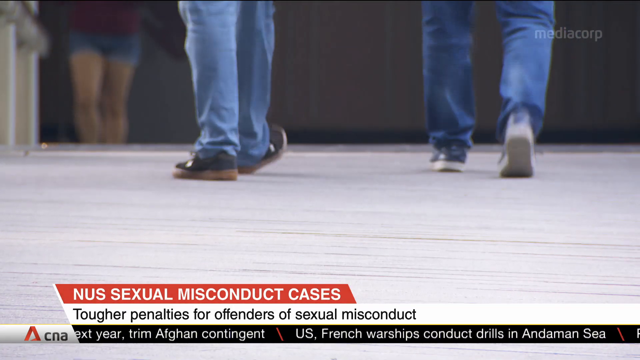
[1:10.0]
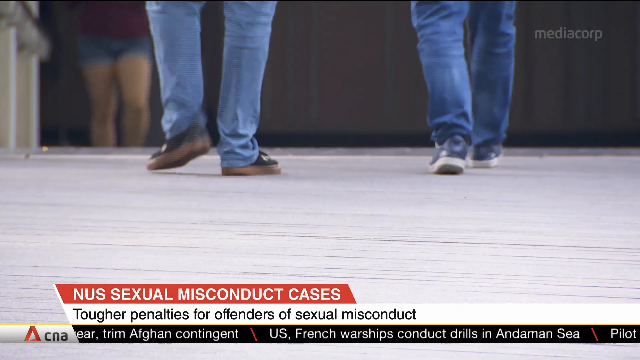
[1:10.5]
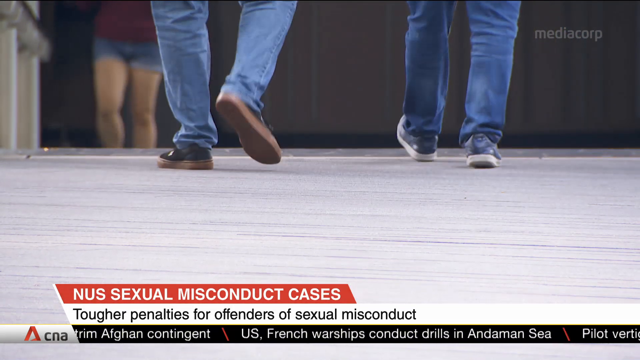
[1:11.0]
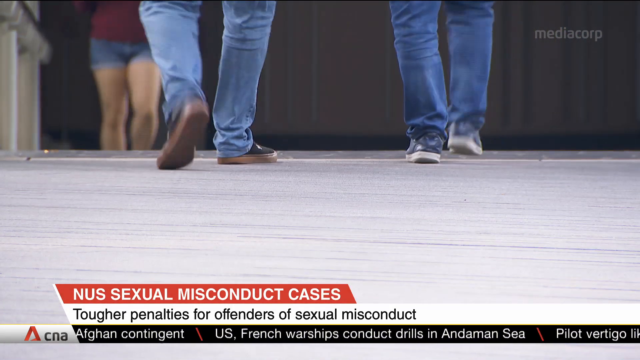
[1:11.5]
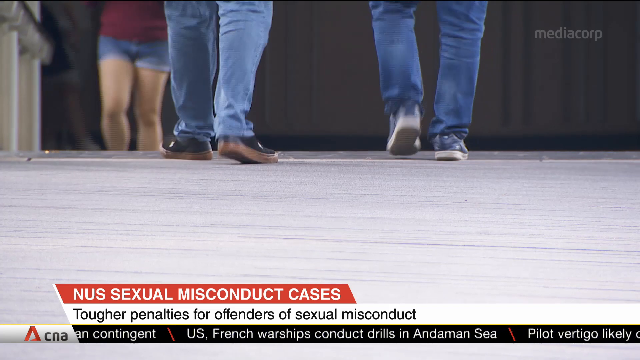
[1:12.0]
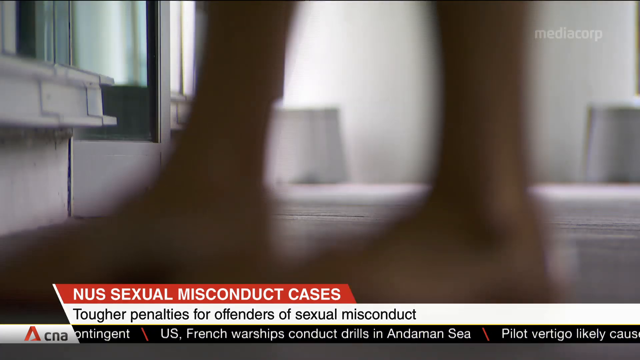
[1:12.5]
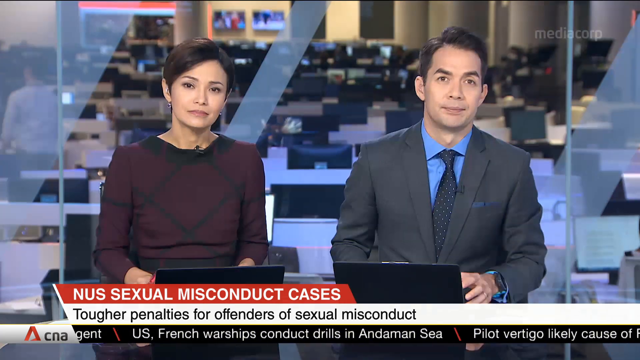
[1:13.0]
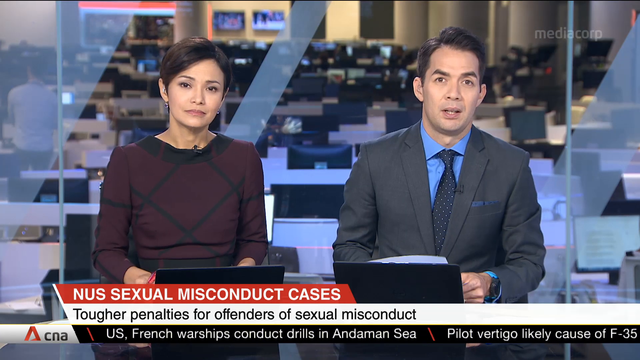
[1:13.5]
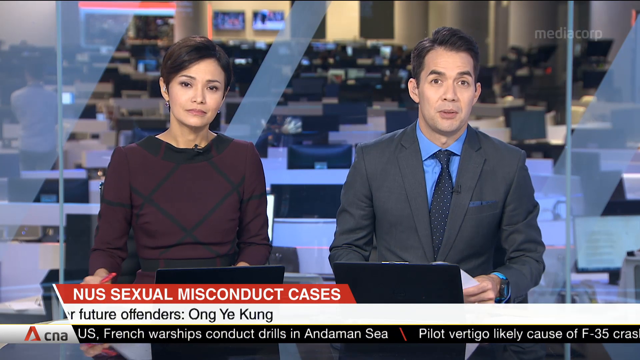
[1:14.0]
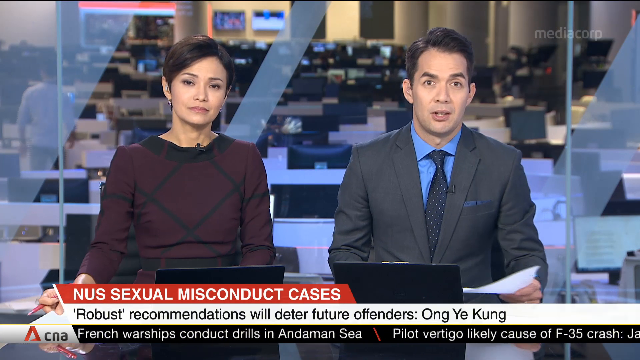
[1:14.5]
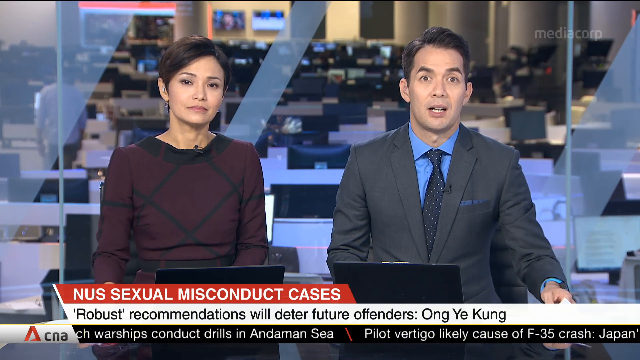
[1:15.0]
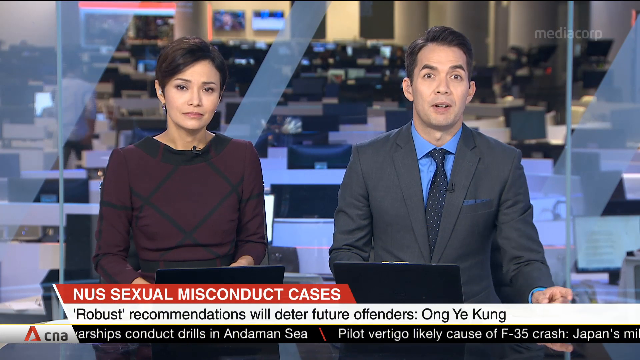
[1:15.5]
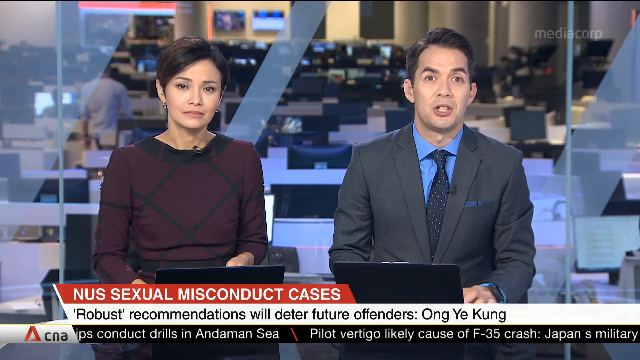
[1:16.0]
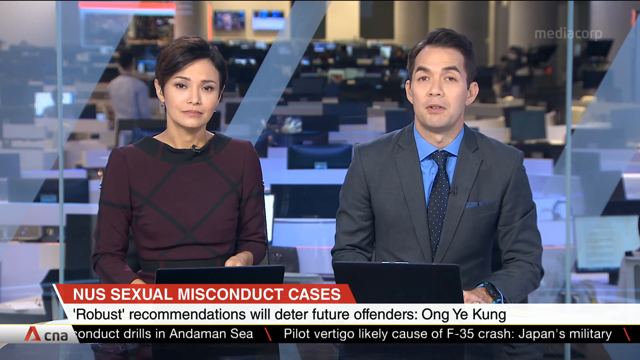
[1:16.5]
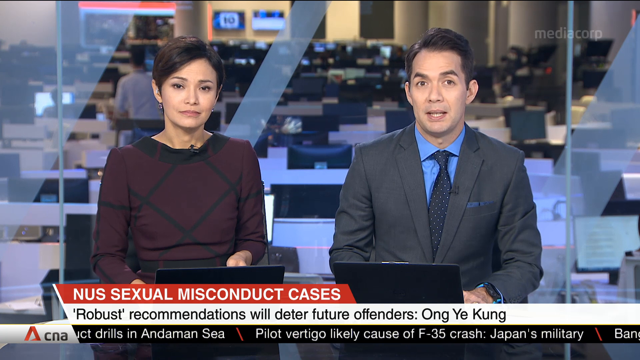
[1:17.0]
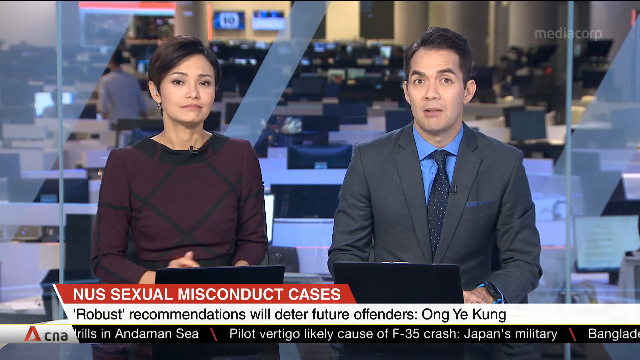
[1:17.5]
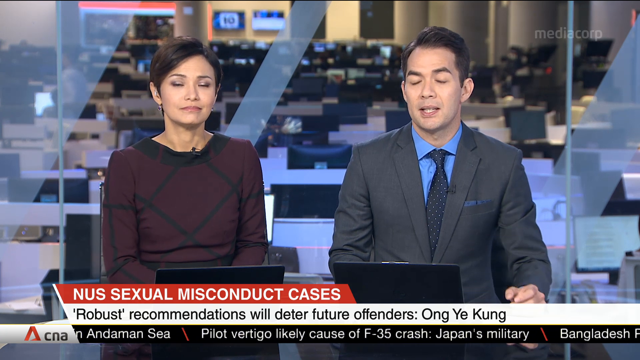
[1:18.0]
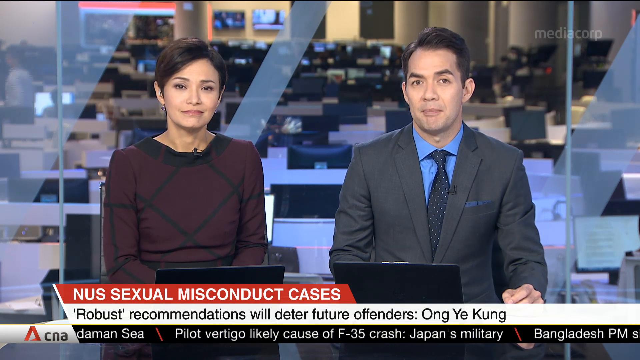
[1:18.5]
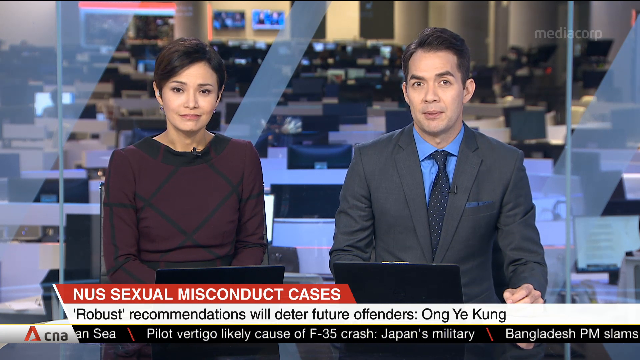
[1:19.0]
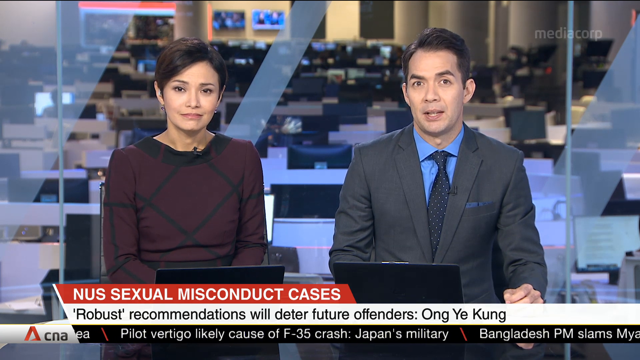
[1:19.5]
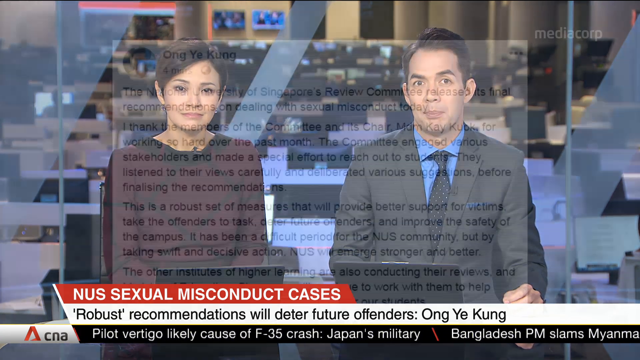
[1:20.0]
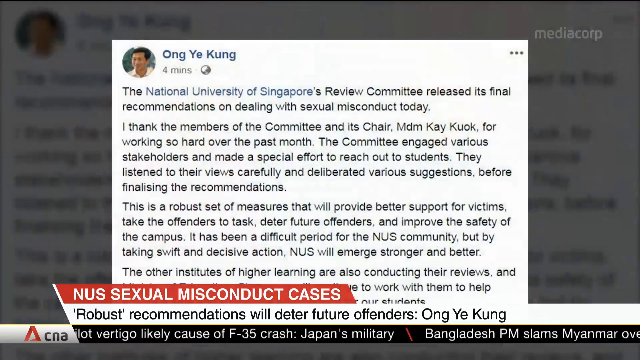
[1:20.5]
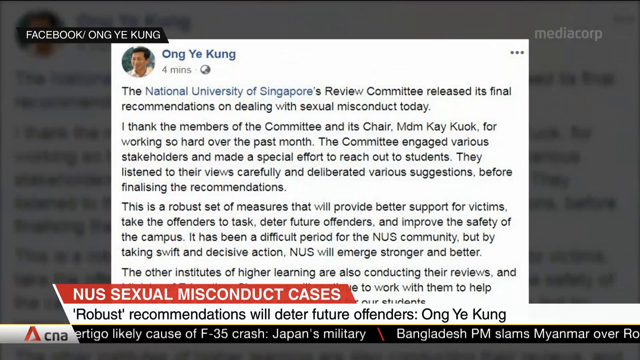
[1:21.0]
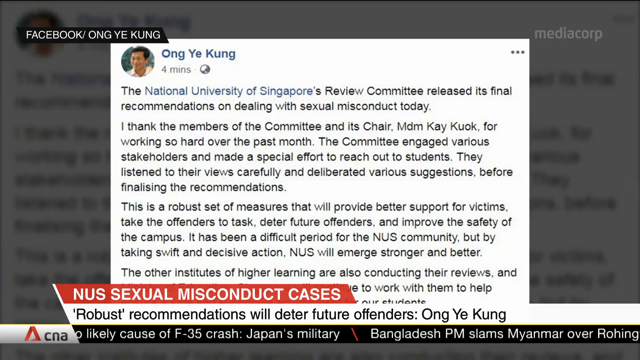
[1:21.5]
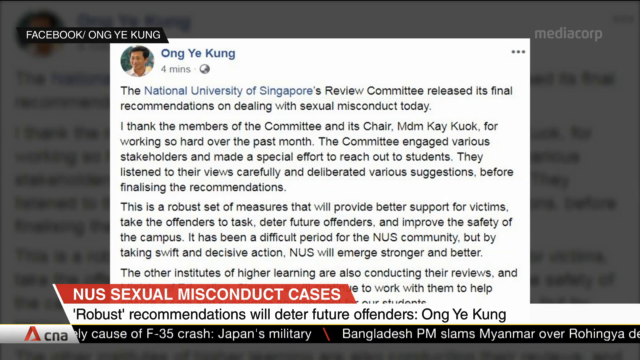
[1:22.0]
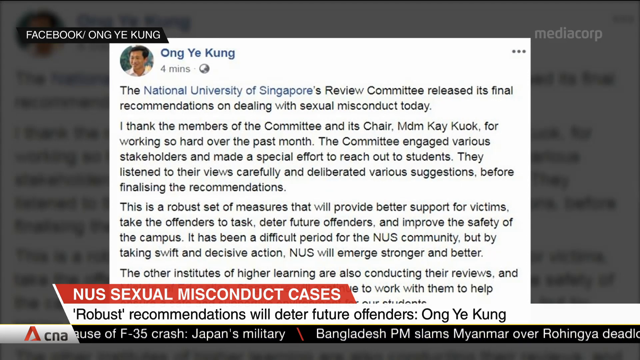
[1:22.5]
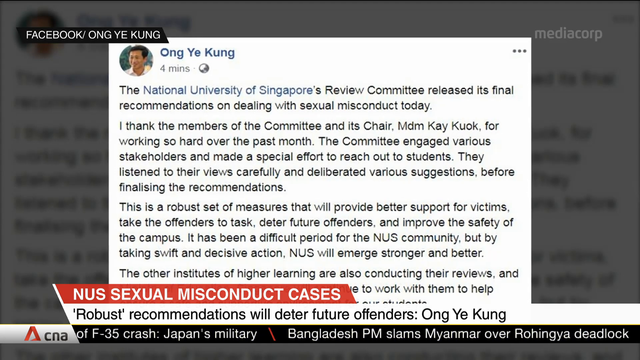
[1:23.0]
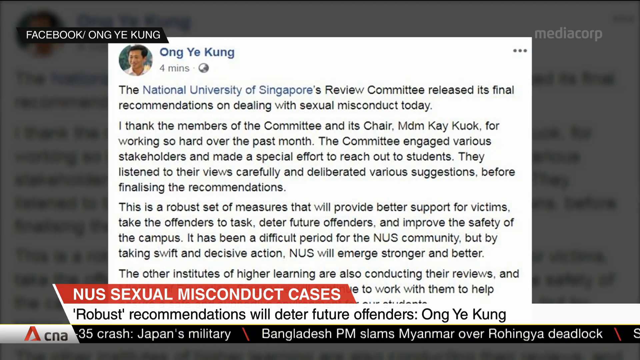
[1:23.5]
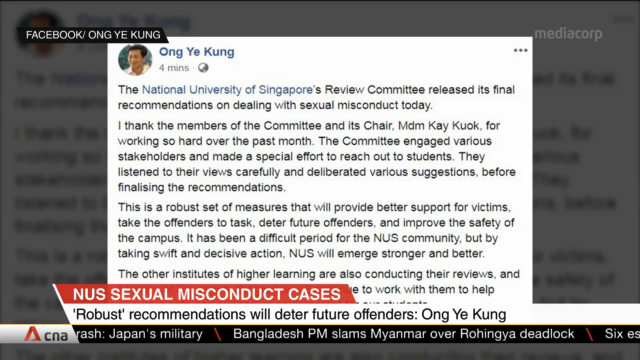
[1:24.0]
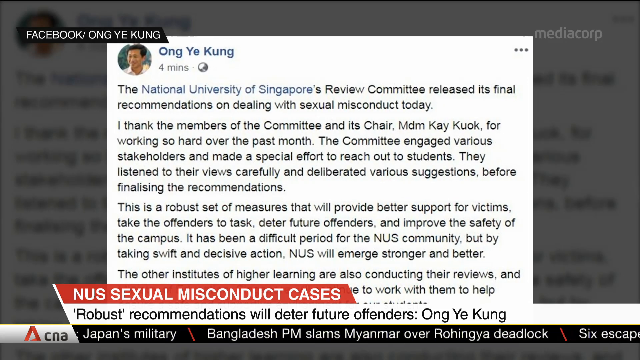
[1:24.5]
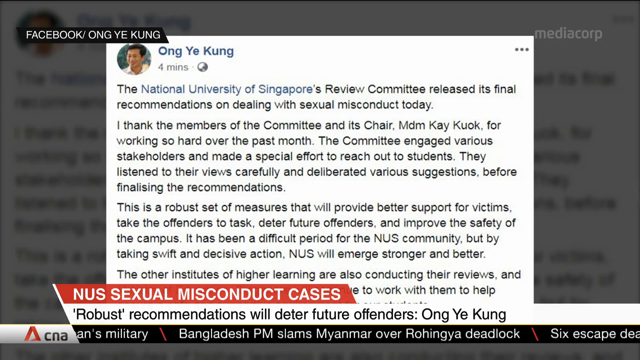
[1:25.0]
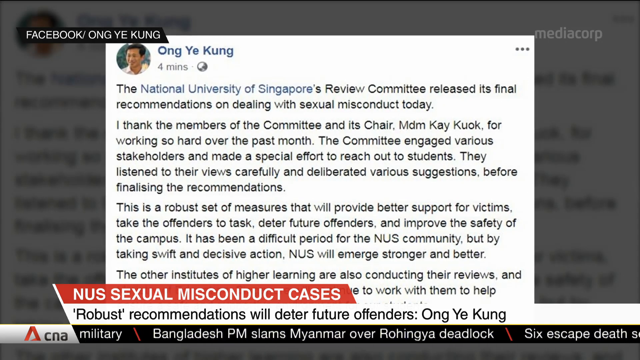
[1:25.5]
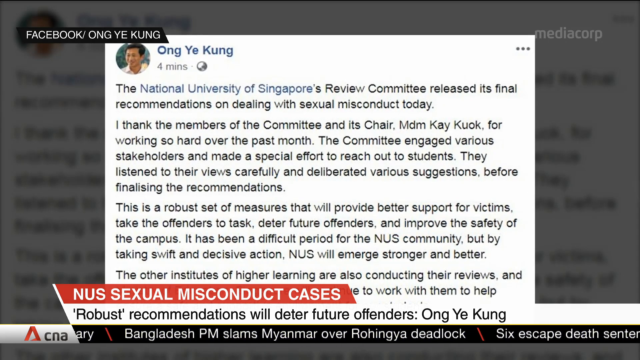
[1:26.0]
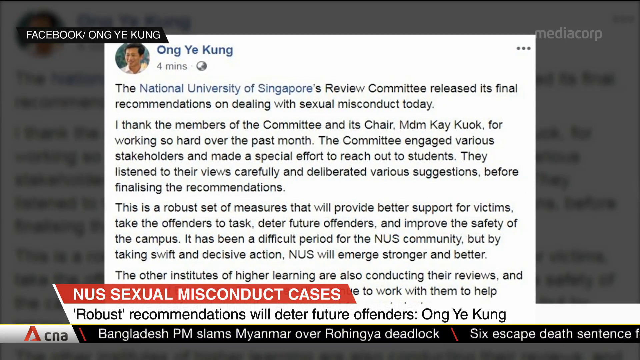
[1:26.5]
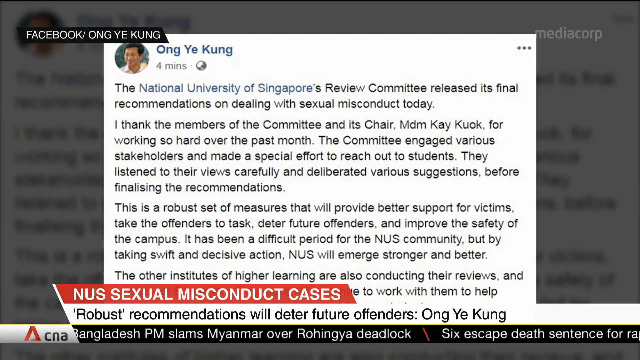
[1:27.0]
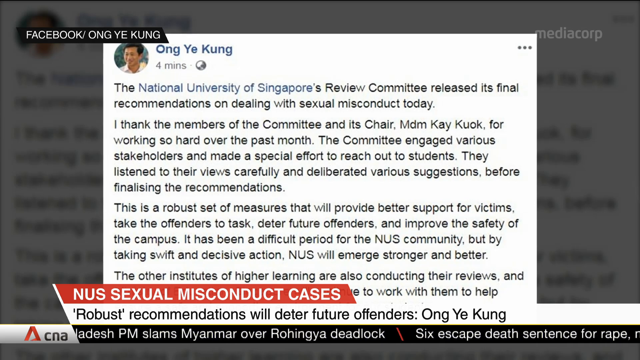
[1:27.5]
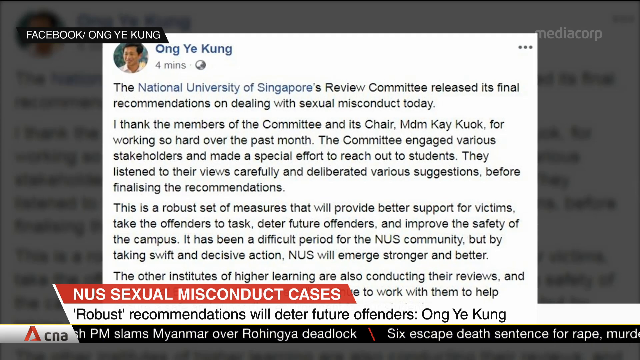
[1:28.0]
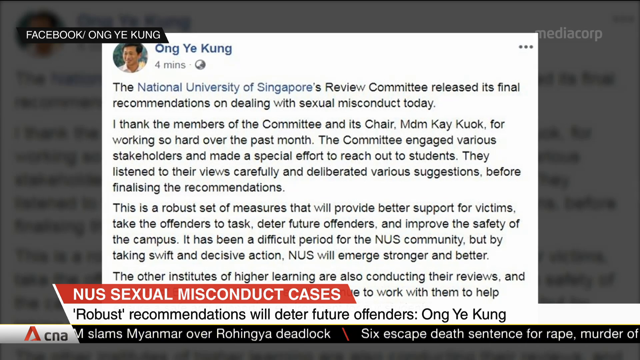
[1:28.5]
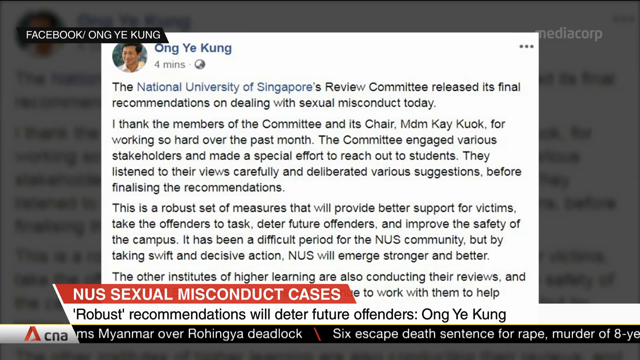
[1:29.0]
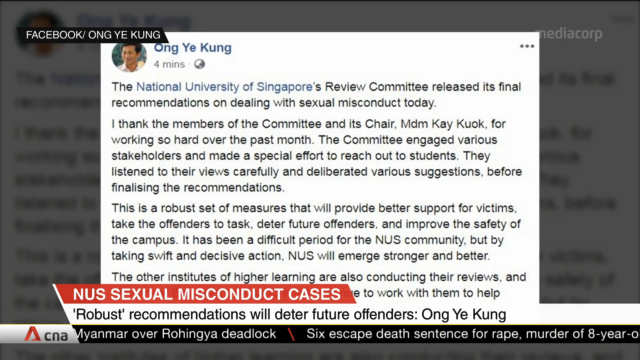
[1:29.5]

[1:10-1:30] People walk inside the NUS building, different kinds of people wearing different kinds of clothes. There are ladies and gentlemen; some wear long jeans, some wear short jeans, and one lady wears a short, pink shirt. The scene returns to the newsroom, where the woman news reader is still talking. A Facebook post from Ong Ye Kung then appears, reading: "the National Universities of Singapore's Review Committee released its final recommendations on dealing with sexual misconduct today. I thank the members of the committee and its chair" and continuing "for working so hard over the past month. The committee engaged various stakeholders and made a special effort to reach out to students. They listened to their views carefully and deliberated various".